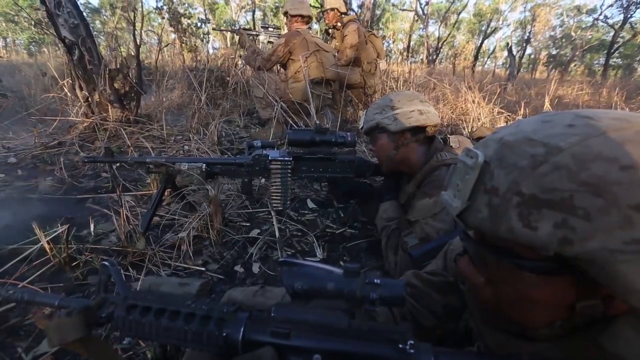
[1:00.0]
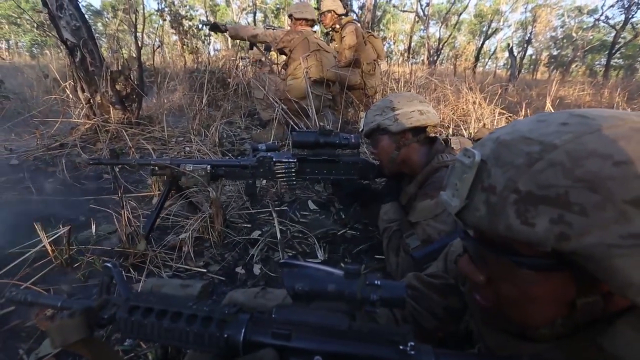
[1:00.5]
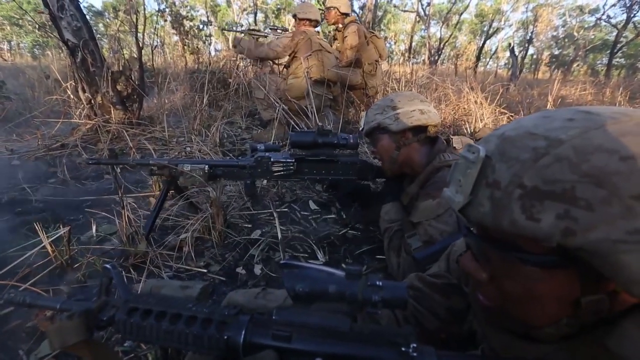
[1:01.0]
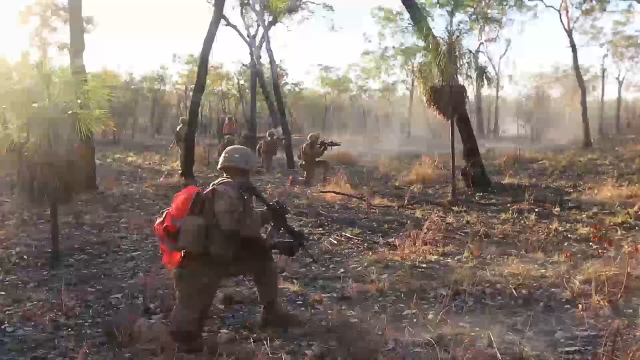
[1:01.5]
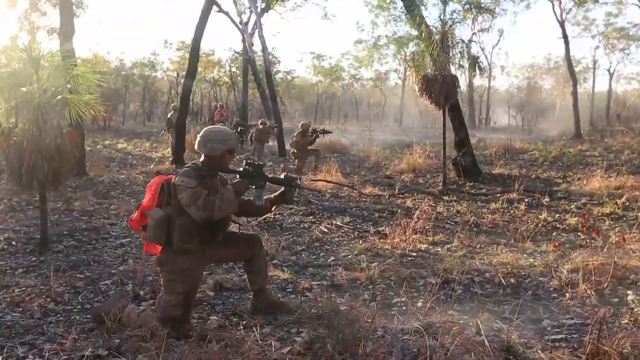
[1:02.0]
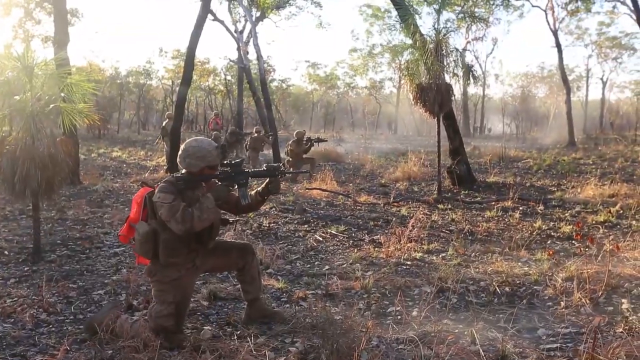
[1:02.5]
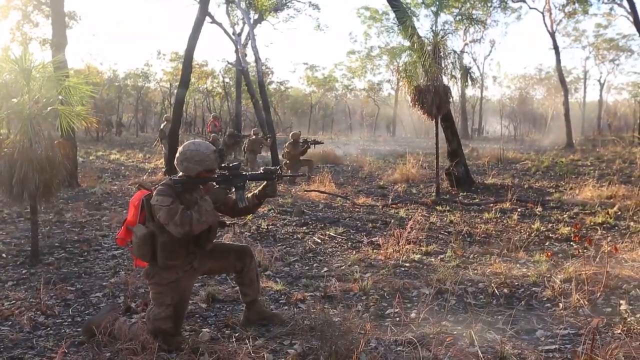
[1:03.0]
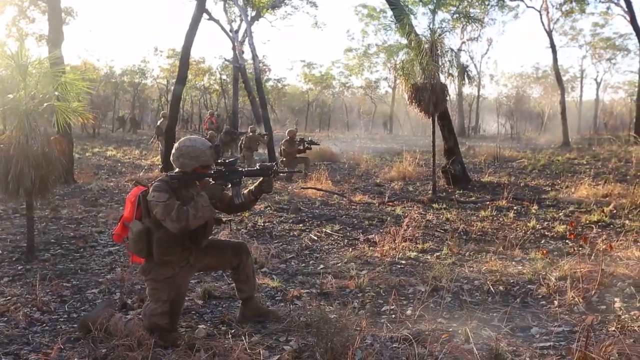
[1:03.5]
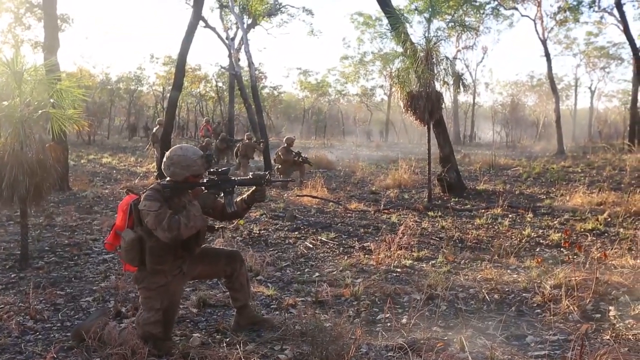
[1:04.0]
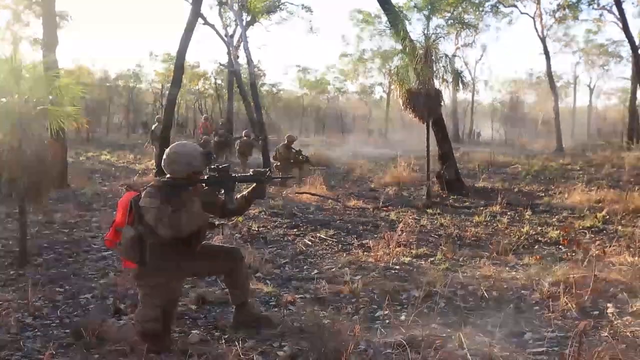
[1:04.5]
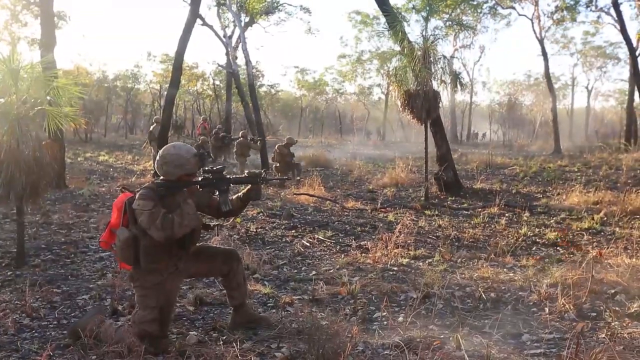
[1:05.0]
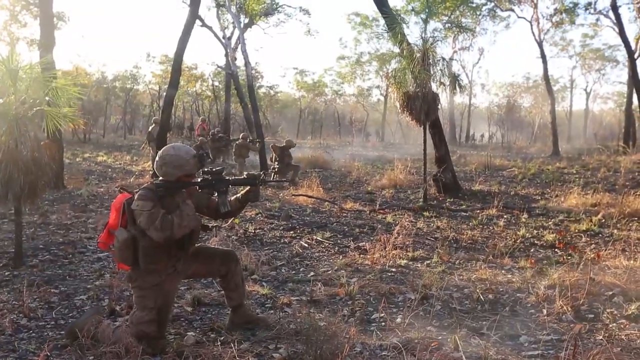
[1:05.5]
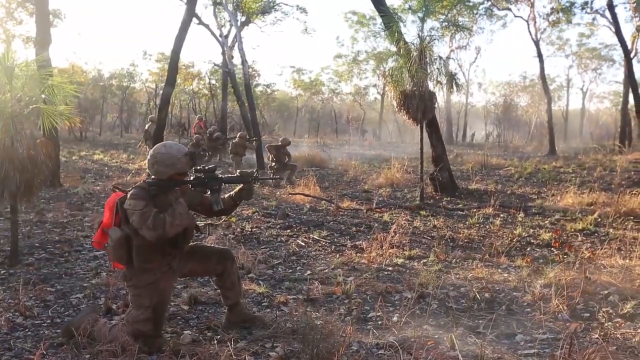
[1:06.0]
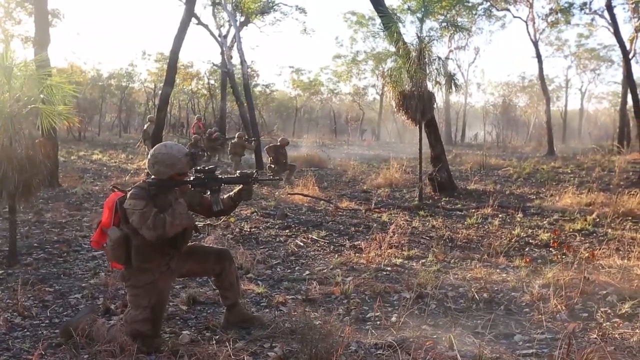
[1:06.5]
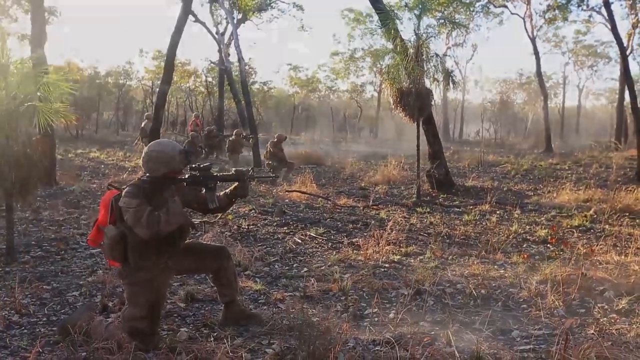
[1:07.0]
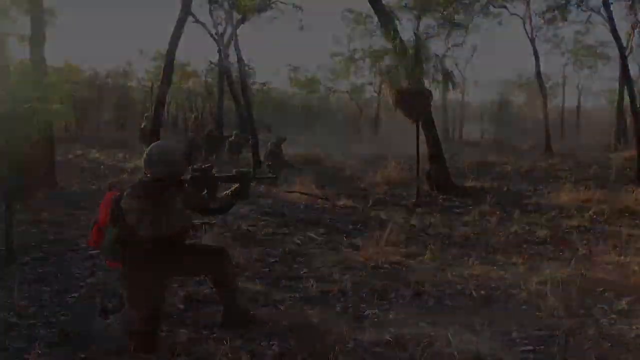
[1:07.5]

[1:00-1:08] As the men kneel, the man in the middle shoots what looks like a machine gun, firing bullets very fast. The others shooting hold their guns a little lower and do not shoot as fast as the man in the middle of the screen. Toward his right, two other men are pointing. About six men are shooting. The focus is on the man closest to the camera, whose bullets come out pretty fast; he is shown cocking the gun in a close-up. He shoots from the lower left corner up toward the top right corner. There is a lot of smoke around the men. The dirt looks very dry, a dark tan, and sparse trees and bushes encircle the men. They are dressed in camouflage clothing and look to be military, apparently from the Army judging by their uniforms and colors.